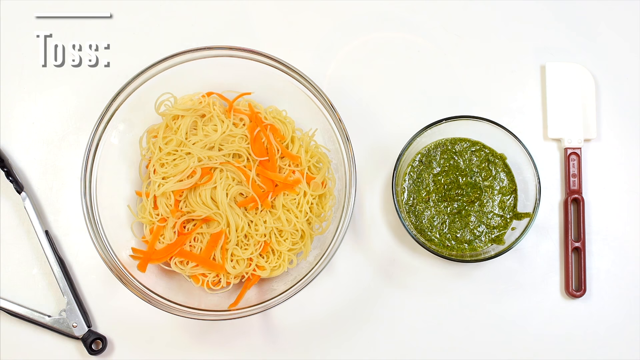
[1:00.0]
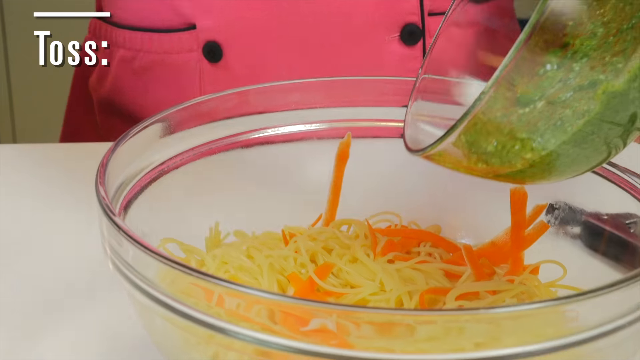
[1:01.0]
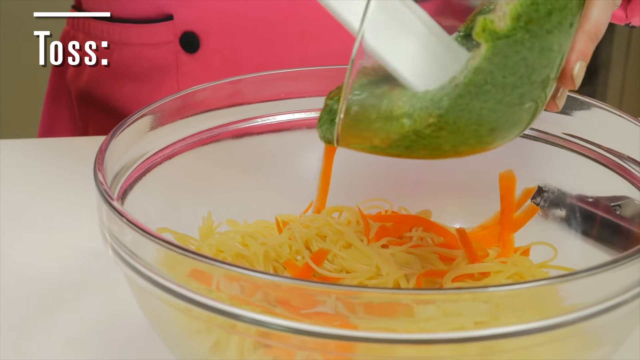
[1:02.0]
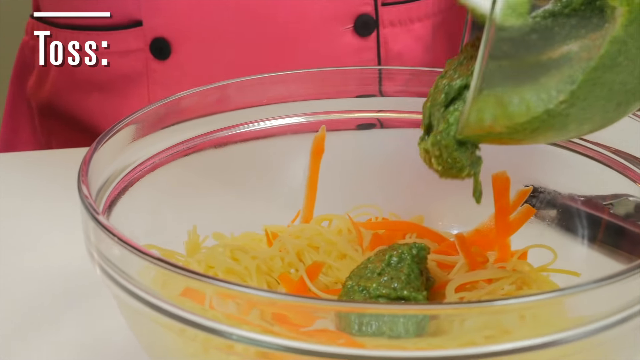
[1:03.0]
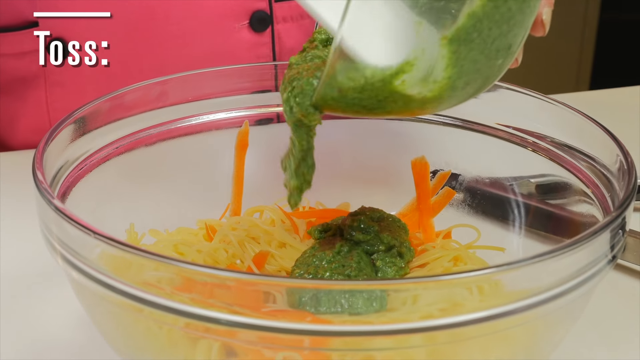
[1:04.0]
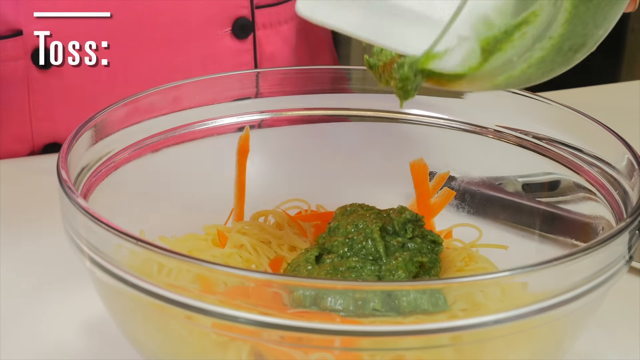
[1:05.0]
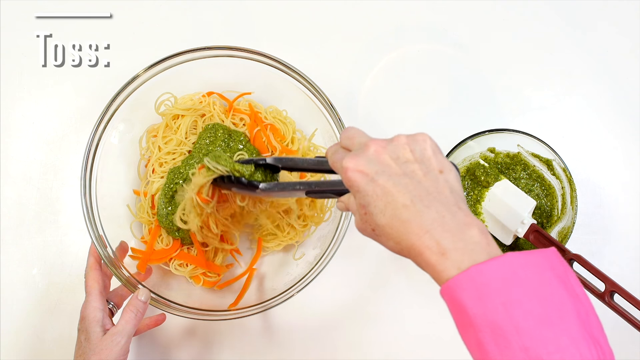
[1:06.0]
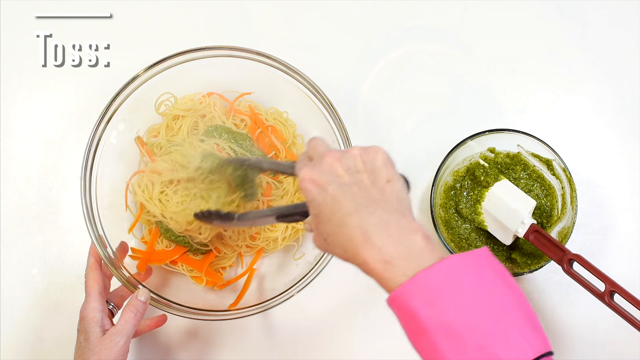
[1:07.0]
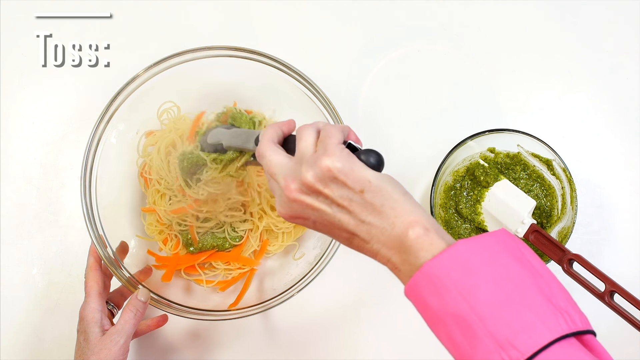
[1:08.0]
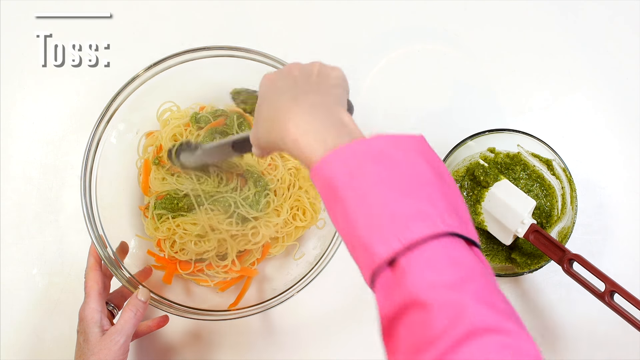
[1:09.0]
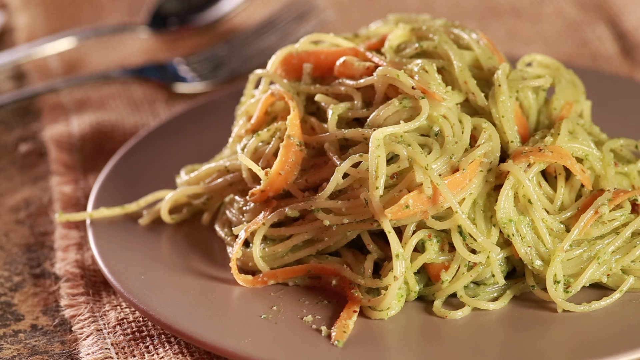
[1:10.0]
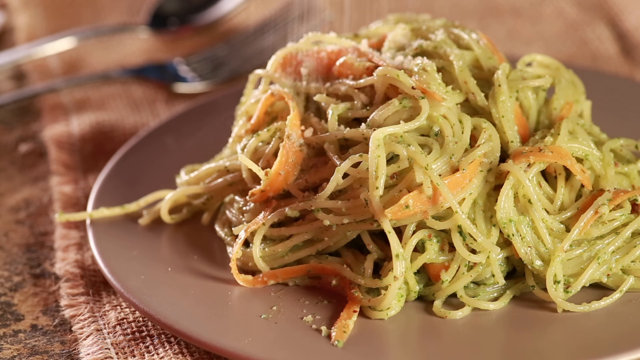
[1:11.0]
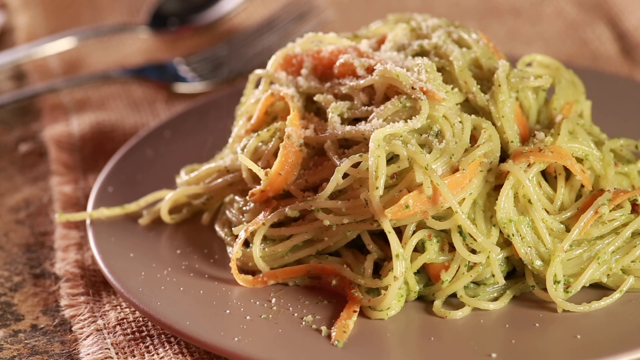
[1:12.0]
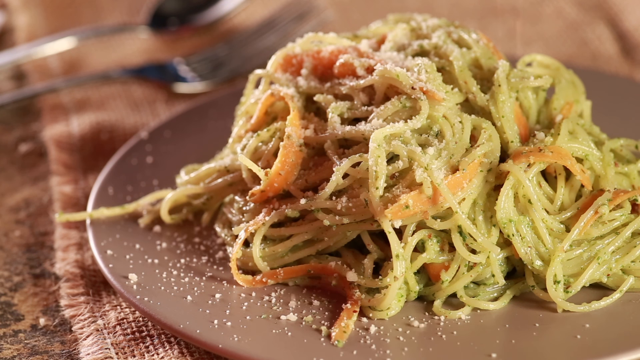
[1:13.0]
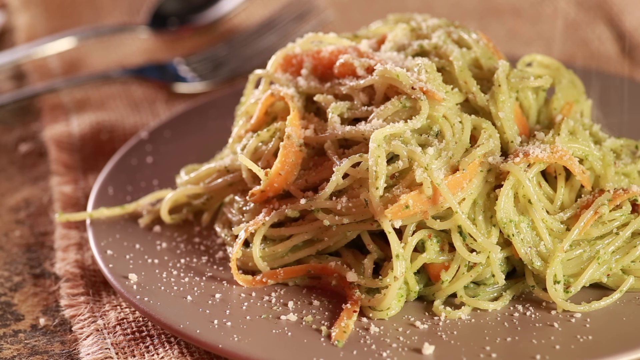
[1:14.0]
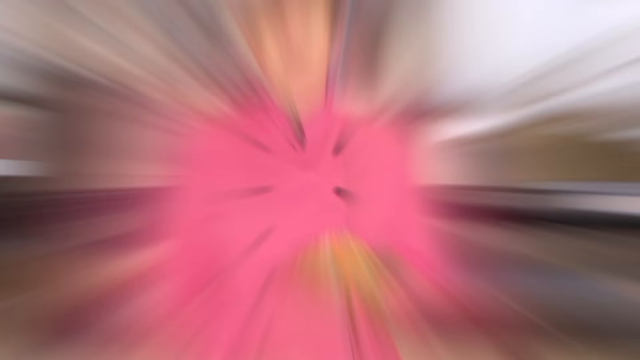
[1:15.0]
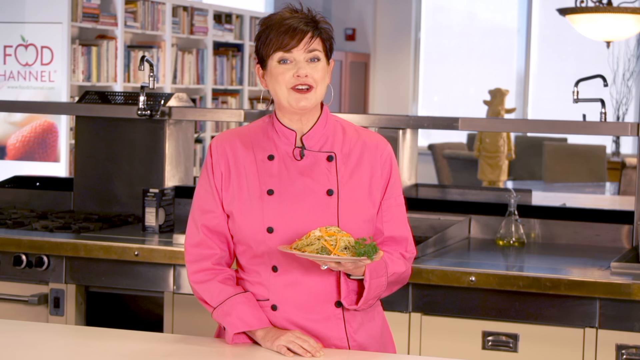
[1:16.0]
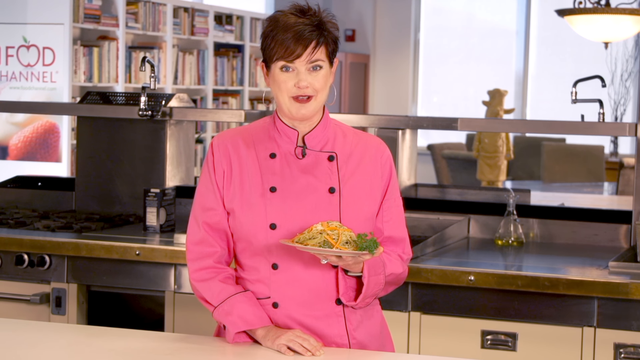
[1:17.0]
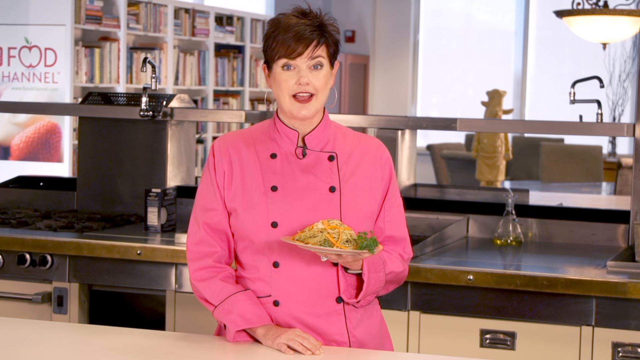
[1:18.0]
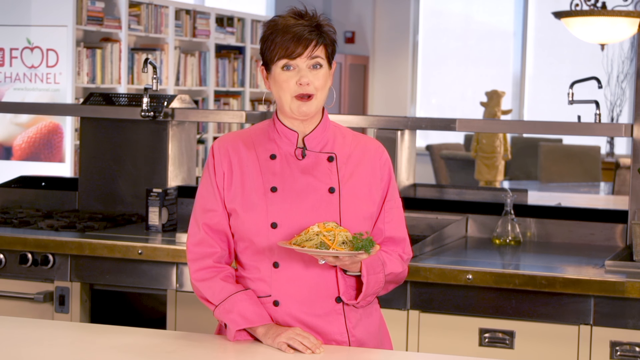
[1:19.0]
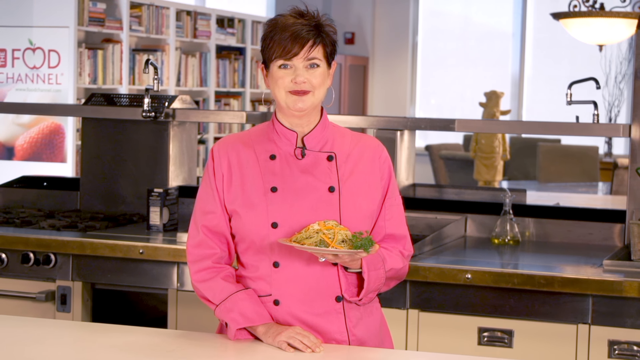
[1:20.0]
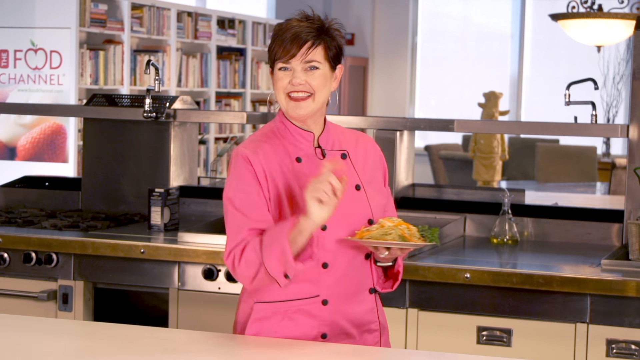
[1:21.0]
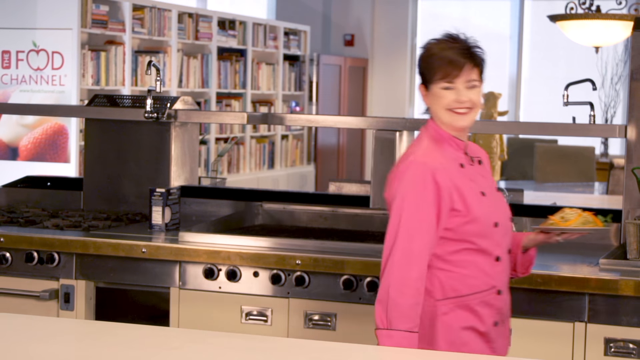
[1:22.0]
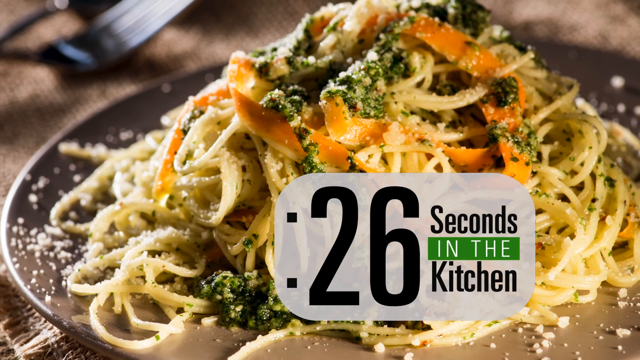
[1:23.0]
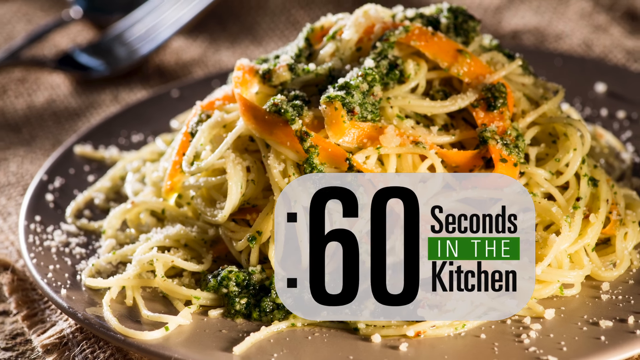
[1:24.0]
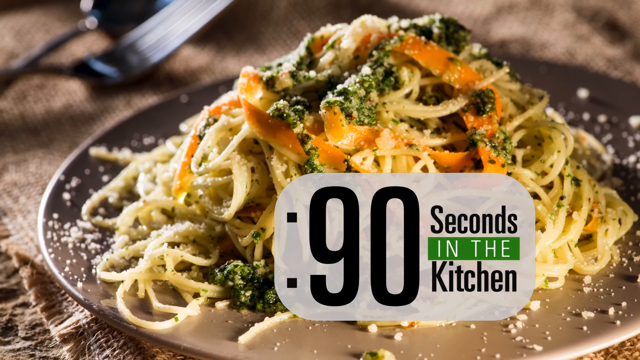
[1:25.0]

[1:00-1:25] Two bowls are on a white surface: a big one with noodles and carrots, and another with green paste. Tongs are visible in the bottom left corner, and toward the right of the screen there seems to be a mixer or spatula-type utensil with a white end. White text in the top left shows what is going on. The scene shifts to a hand picking up the green bowl from the right side and dumping it into the bigger bowl with the pasta or noodles and carrot strips. In another view of the bowls, the right hand mixes everything with the metal tongs and keeps mixing. Next, everything is already mixed and placed on a brown plate, with utensils visible in the background; the plate is on what looks like a brown surface. The plate holds noodles with carrots and everything mixed in, with a sprinkle of maybe parmesan cheese on top of the pasta. The scene shifts back to a view with a bookshelf filled with books in the background, a table with some chairs and a yellow statue toward the right, and what appears to be a stovetop toward the left. In the middle stands a lady with short hair wearing pink, holding a plate of the pasta she just made on top of her hand. She talks directly into the camera before walking off toward the right. The scene then shifts to a close-up of the pasta, with what appears to be a timer overlaid in the front of the screen, a little to the right. The timer counts up, says "seconds in the kitchen", and ends at 90 seconds.